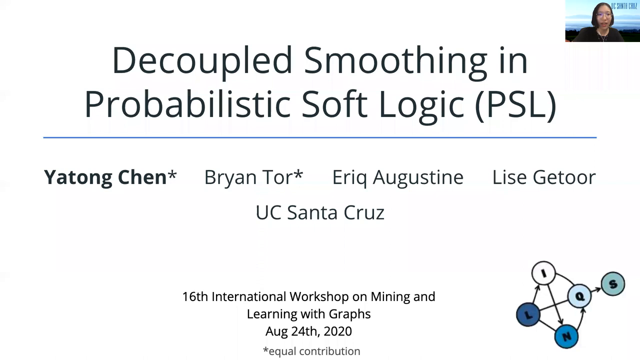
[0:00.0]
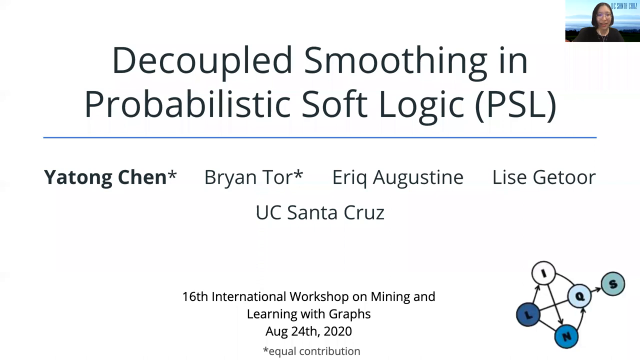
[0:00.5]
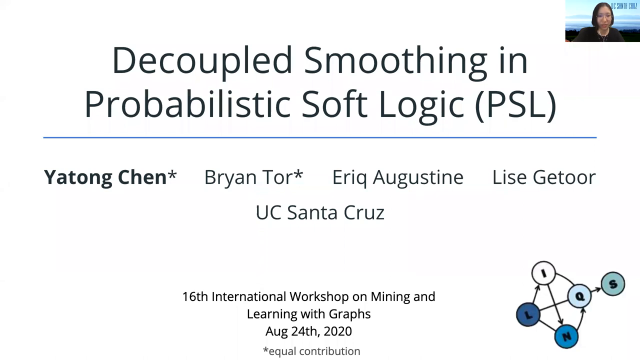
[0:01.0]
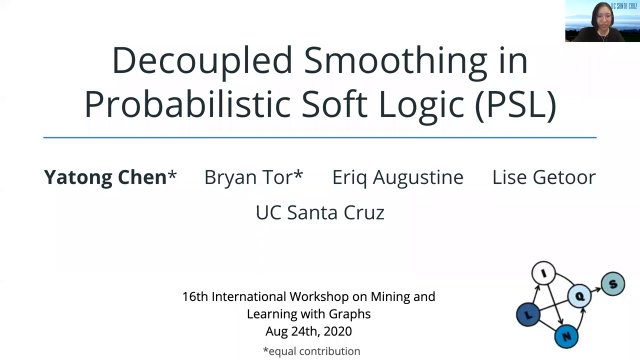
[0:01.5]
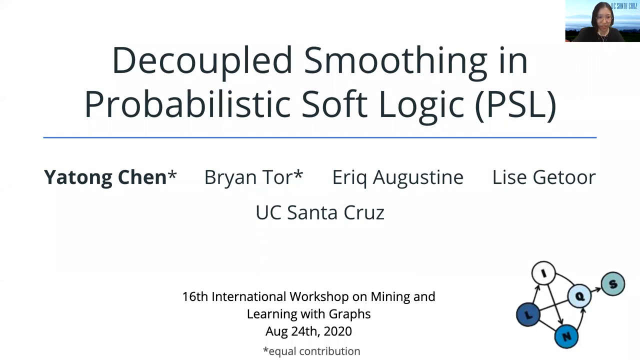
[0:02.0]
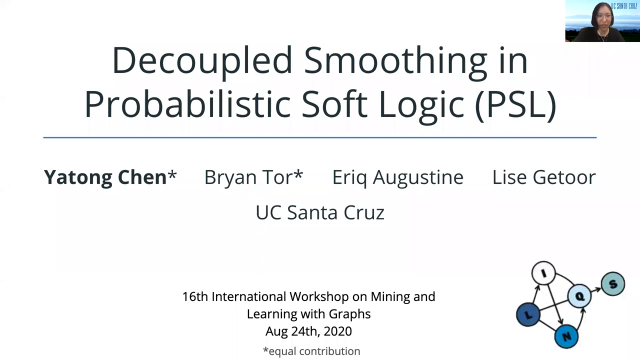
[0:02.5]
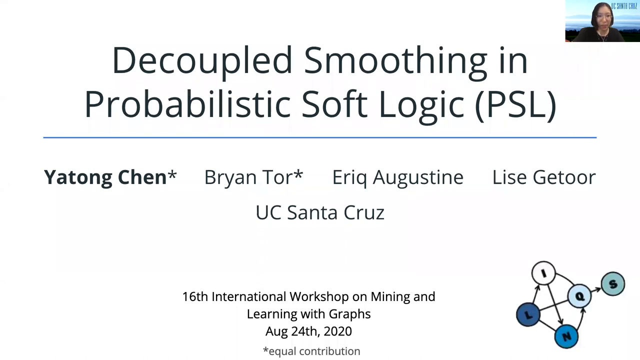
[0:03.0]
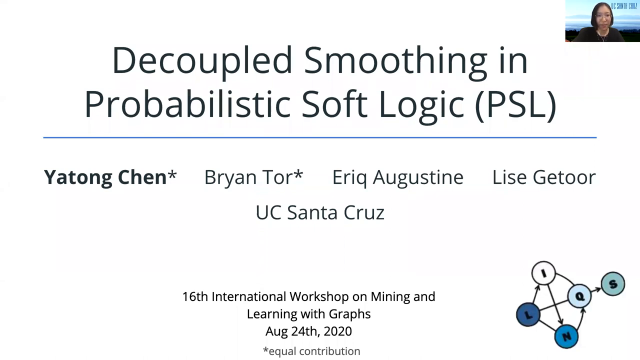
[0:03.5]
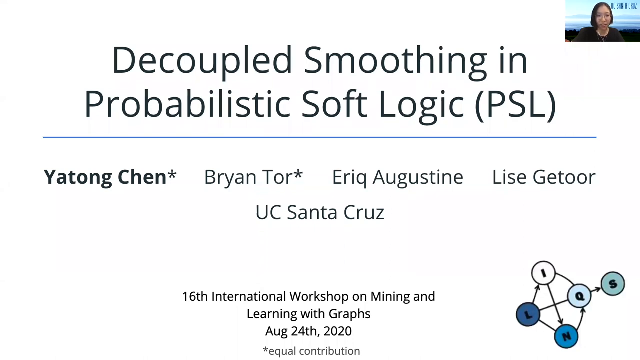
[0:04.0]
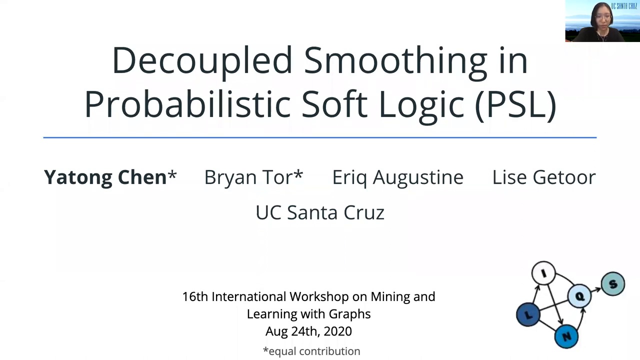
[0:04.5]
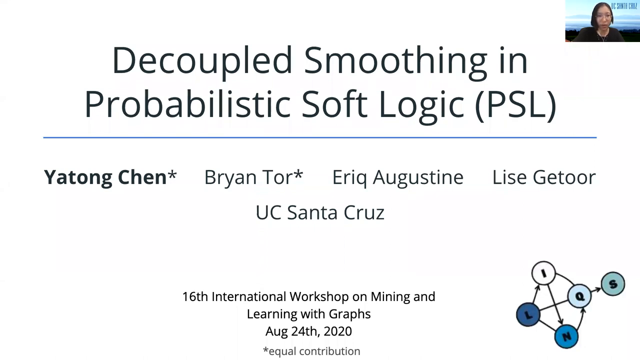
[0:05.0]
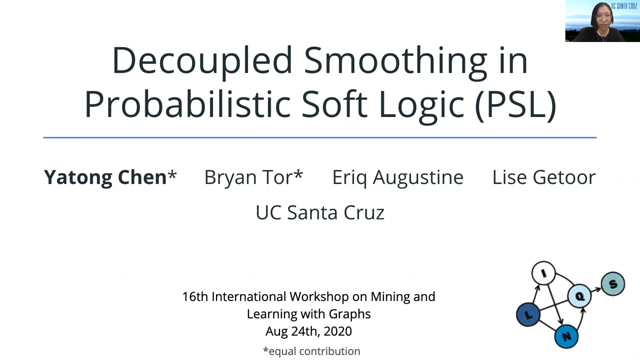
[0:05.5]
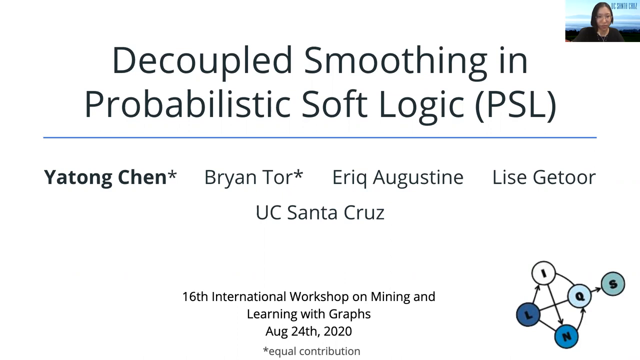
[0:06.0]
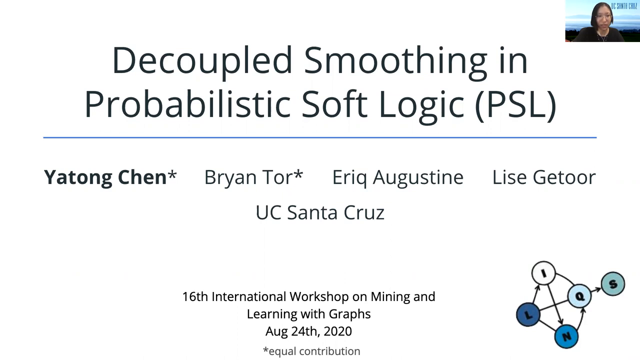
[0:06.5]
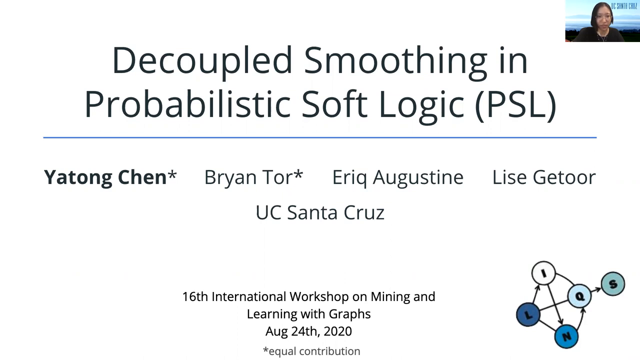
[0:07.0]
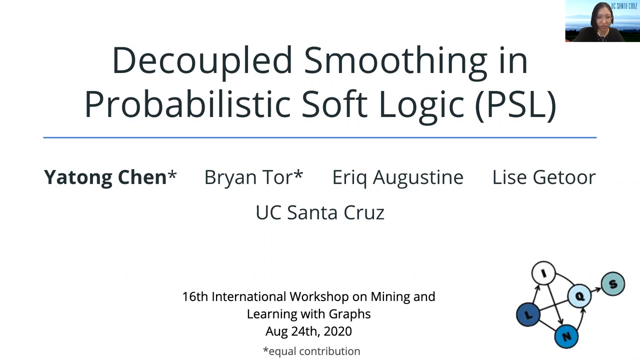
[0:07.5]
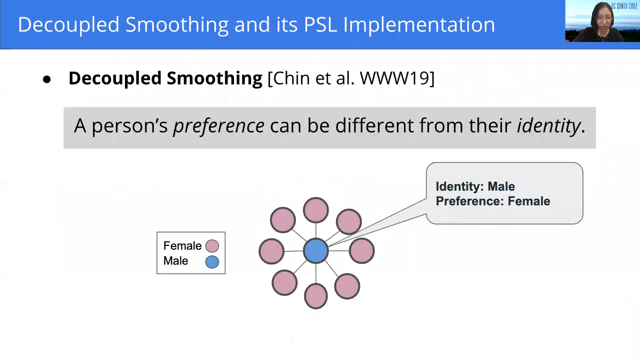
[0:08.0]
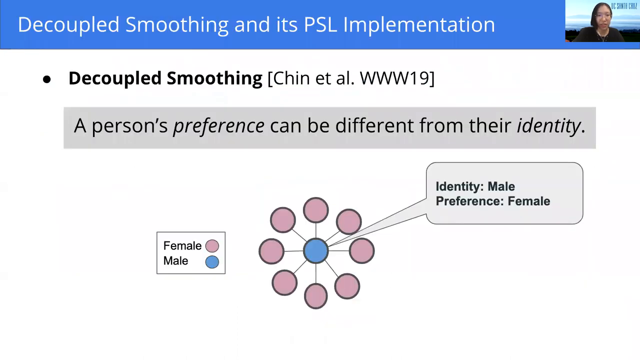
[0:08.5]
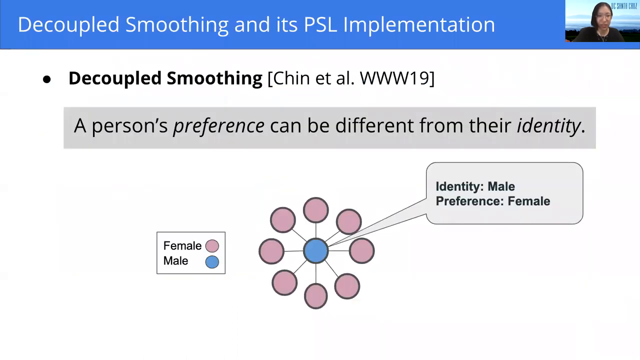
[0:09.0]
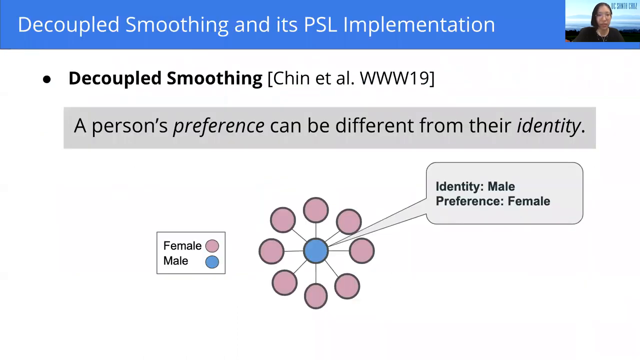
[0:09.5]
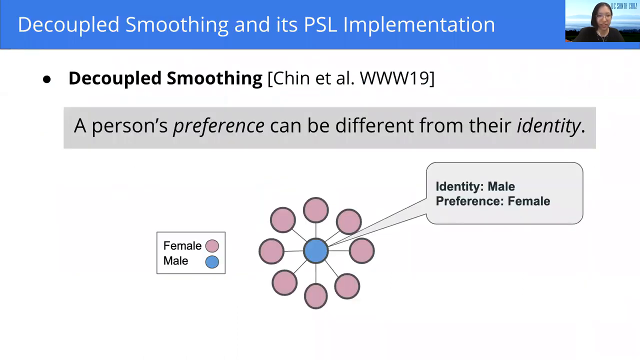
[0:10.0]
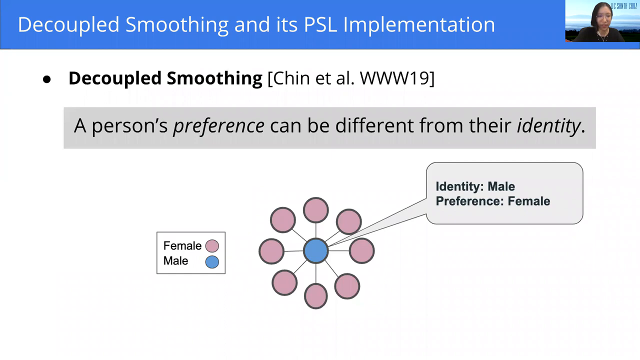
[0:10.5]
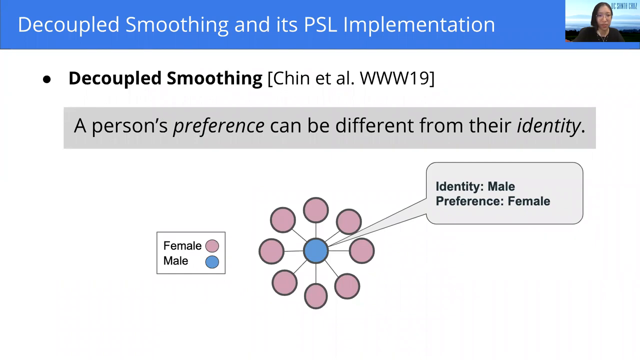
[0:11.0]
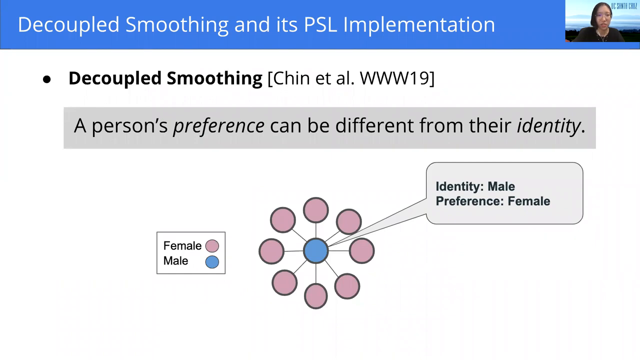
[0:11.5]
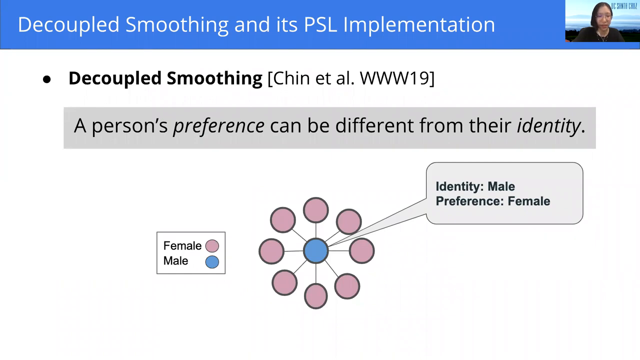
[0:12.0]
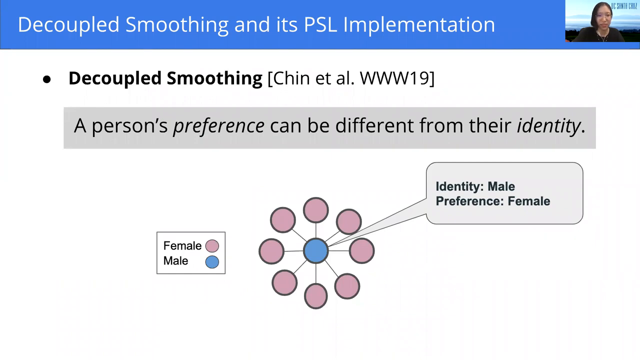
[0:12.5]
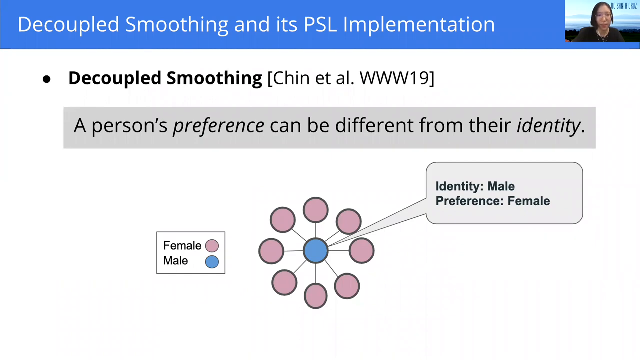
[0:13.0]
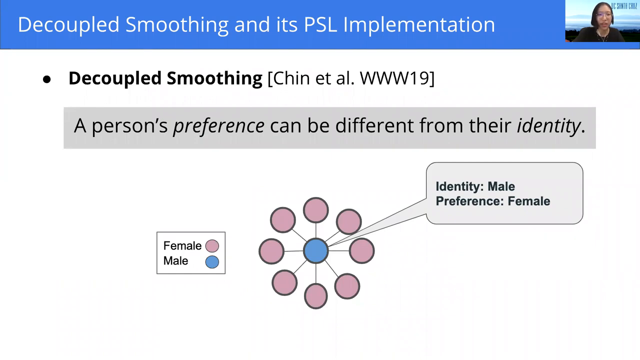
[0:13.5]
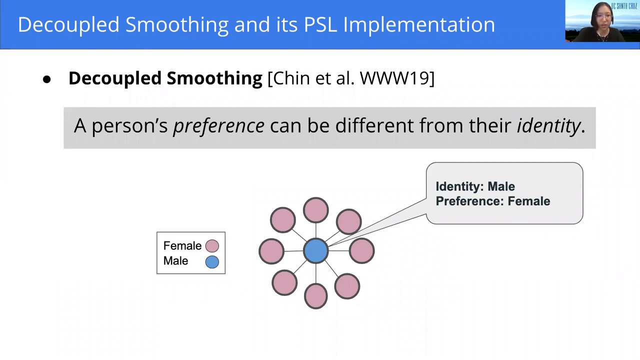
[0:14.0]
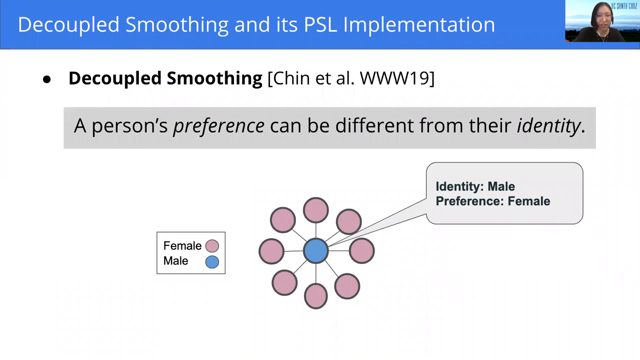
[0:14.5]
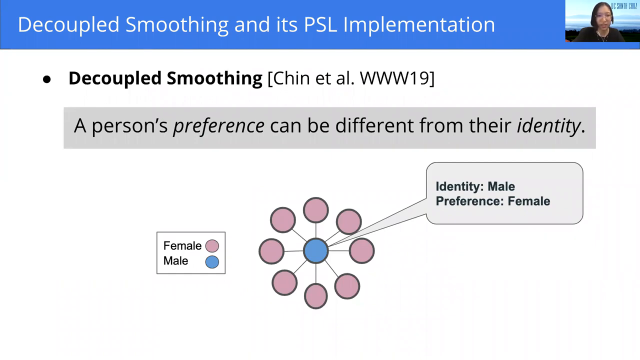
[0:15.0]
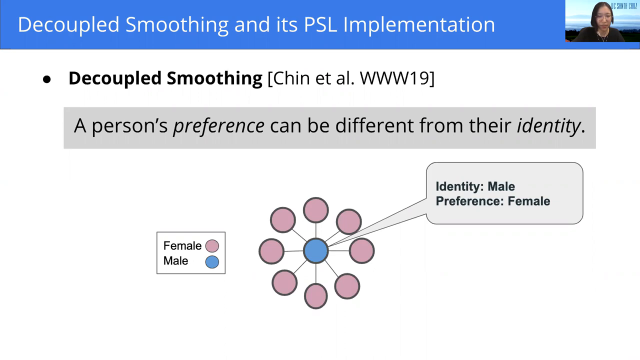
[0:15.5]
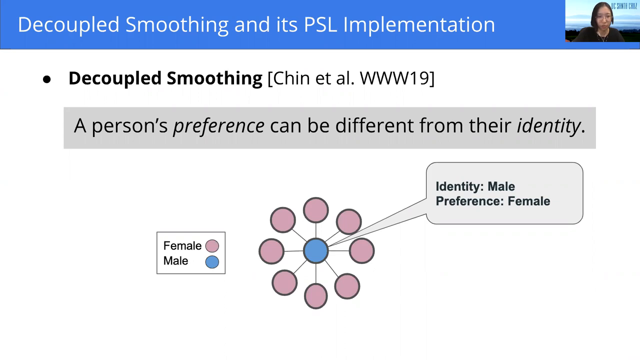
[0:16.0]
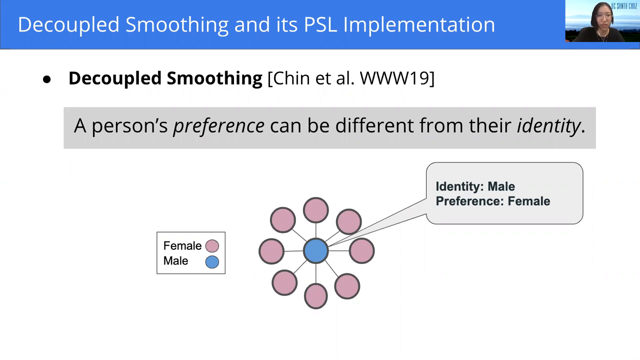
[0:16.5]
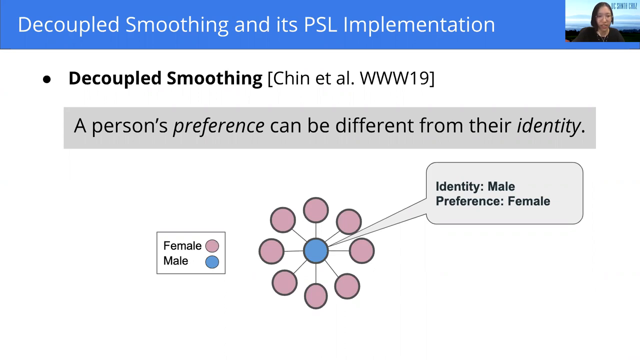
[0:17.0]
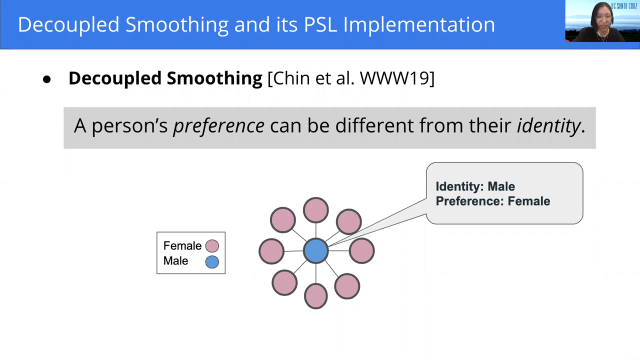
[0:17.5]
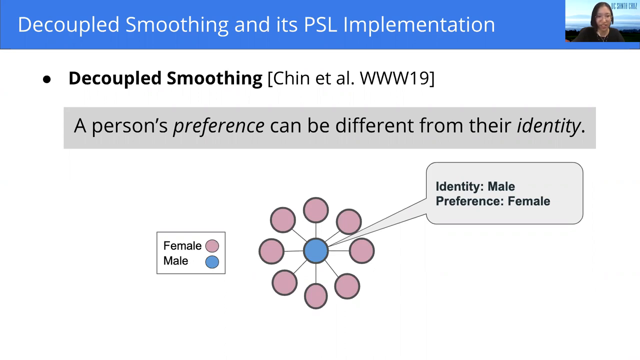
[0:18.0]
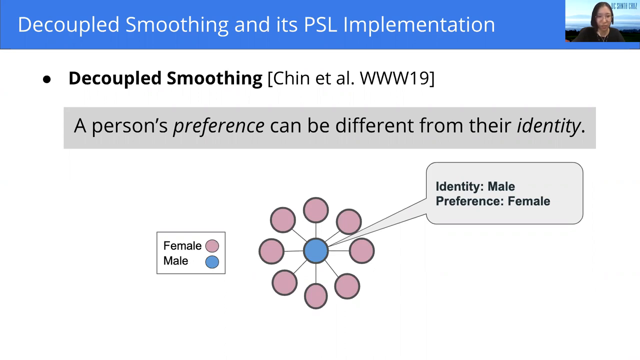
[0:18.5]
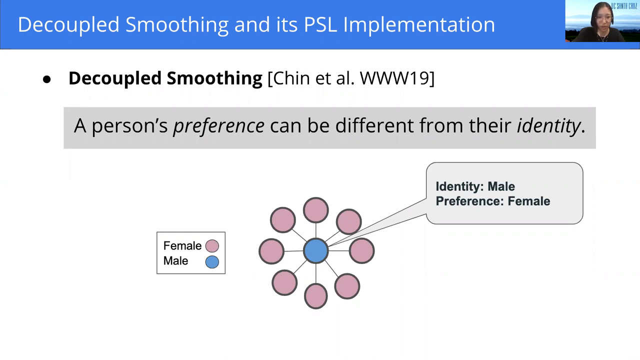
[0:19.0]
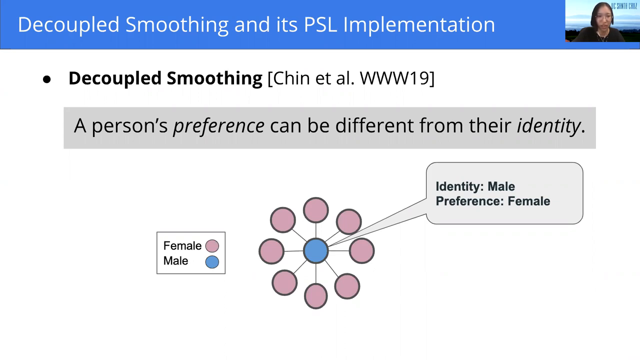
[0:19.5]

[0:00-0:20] On-screen text reads "decoupled smoothing and probabilistic soft logic PSL," followed by a list of names, "Santa Cruz," "international workshop on mining and learning with," and "August 24th, 2020." It looks like the beginning of a slideshow. A woman is talking in the upper right corner of the screen, though she is hard to see. The next slide reads "Decoupled smoothing and its PSL implementation" and "a person's preference can be different from their gender identity," with the labels "female," "male," "identity male," and "preference female." There is something like a pink circle, and one male circle surrounded by several female circles. The background is white, so the content shows up clearly.